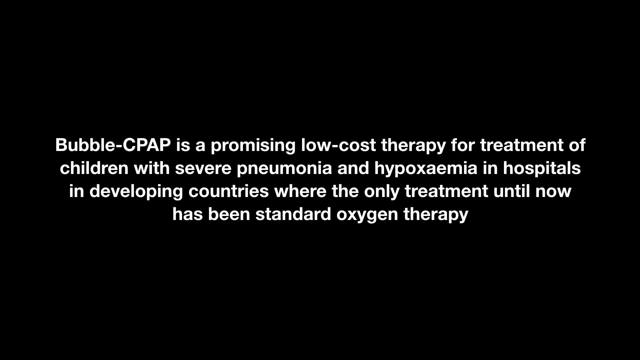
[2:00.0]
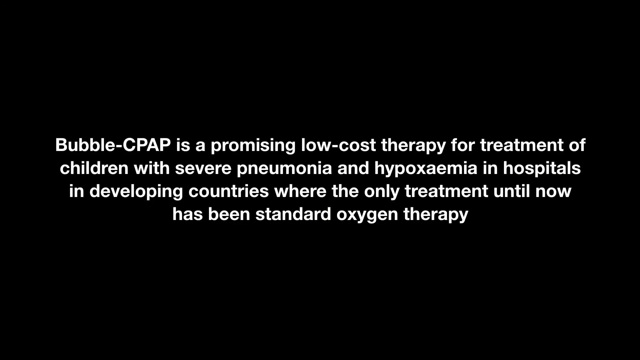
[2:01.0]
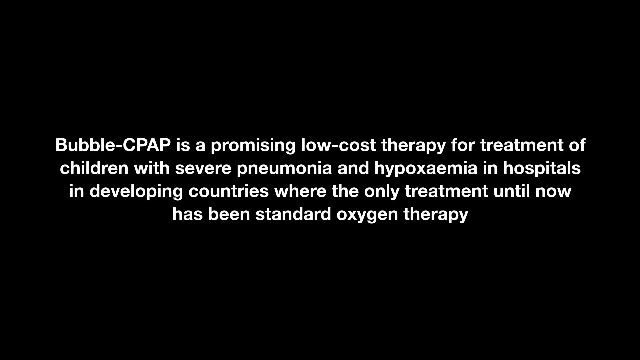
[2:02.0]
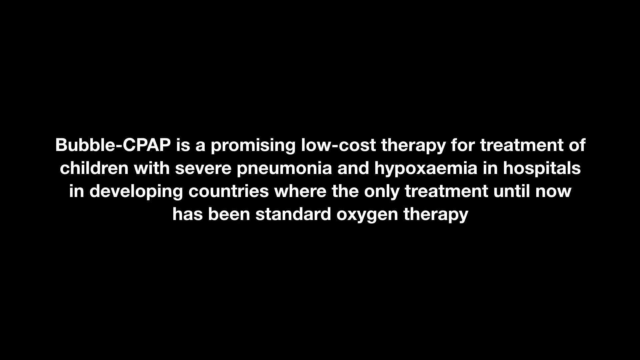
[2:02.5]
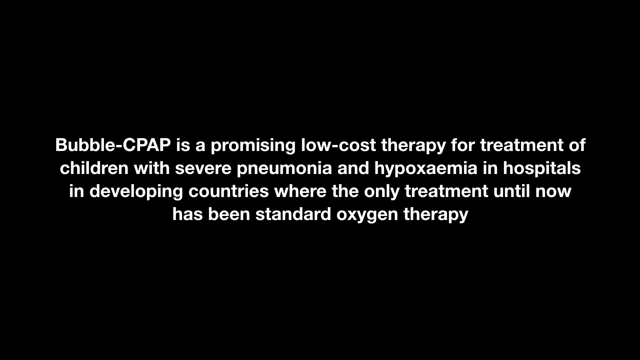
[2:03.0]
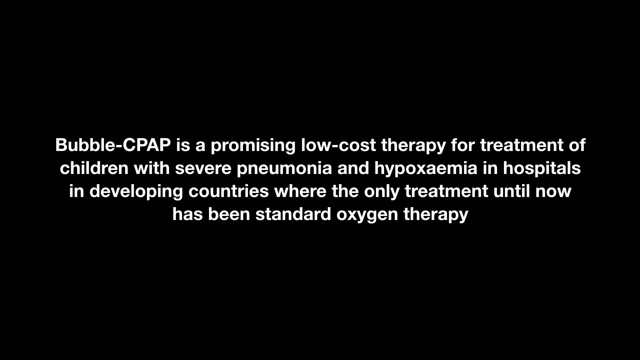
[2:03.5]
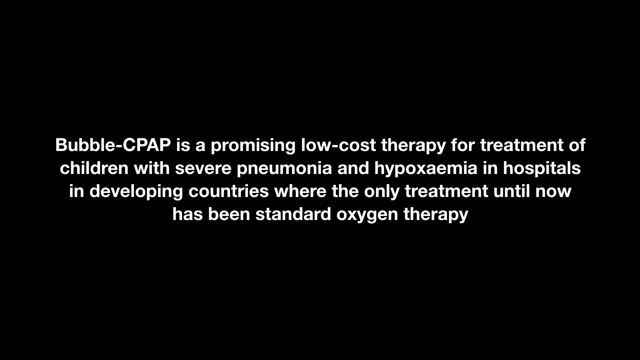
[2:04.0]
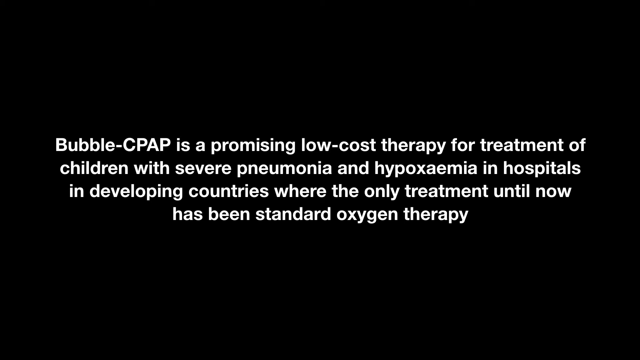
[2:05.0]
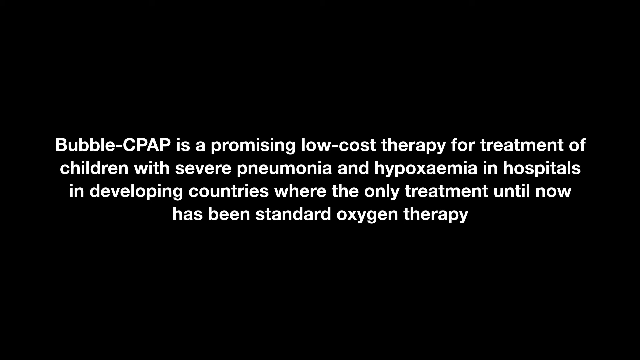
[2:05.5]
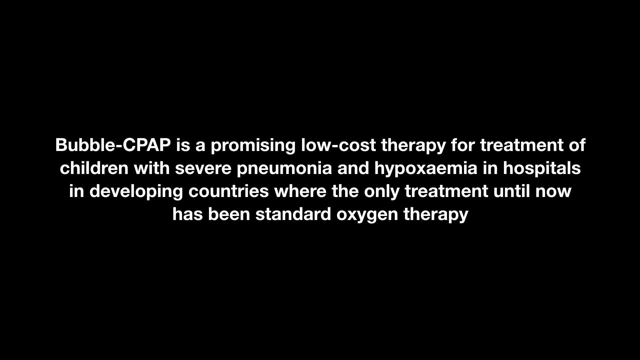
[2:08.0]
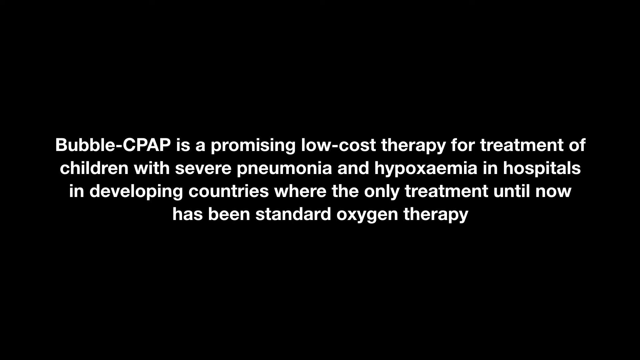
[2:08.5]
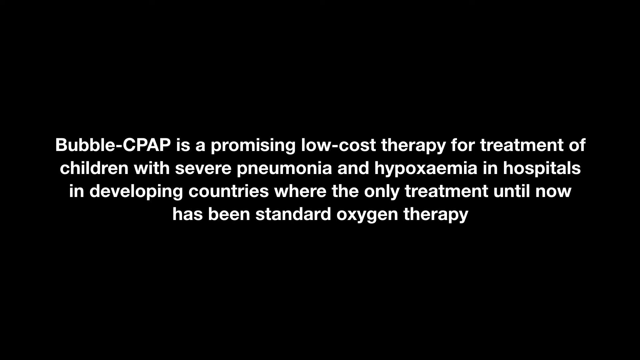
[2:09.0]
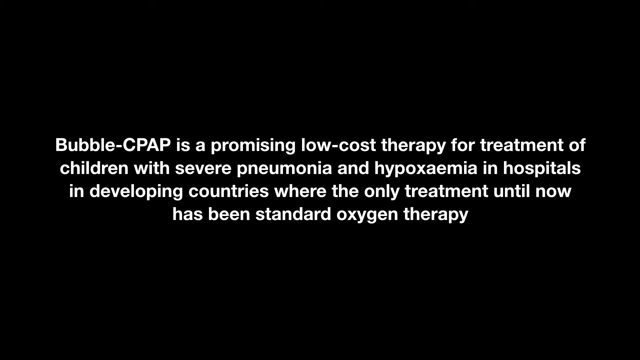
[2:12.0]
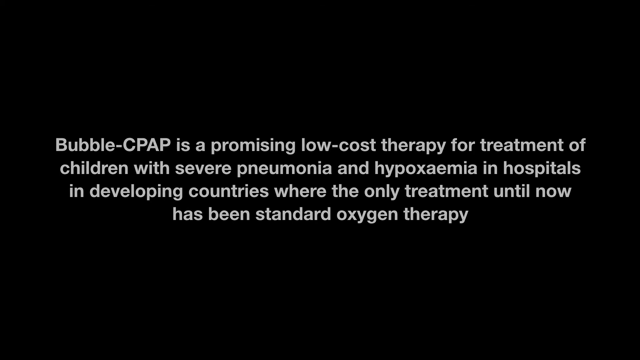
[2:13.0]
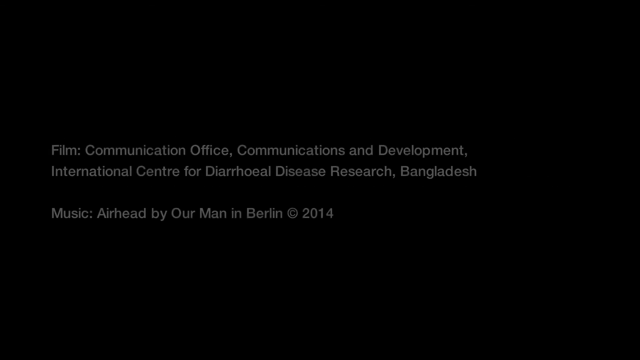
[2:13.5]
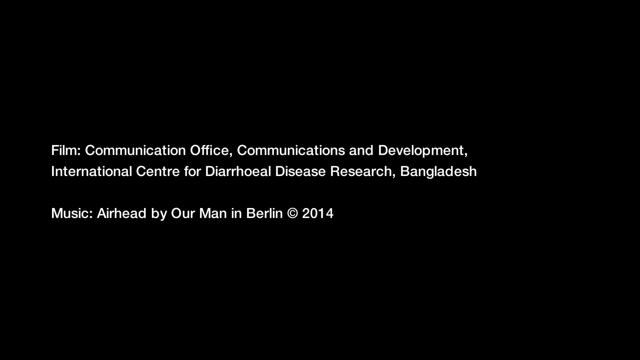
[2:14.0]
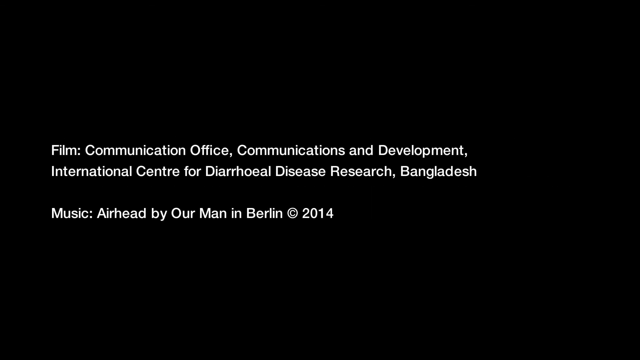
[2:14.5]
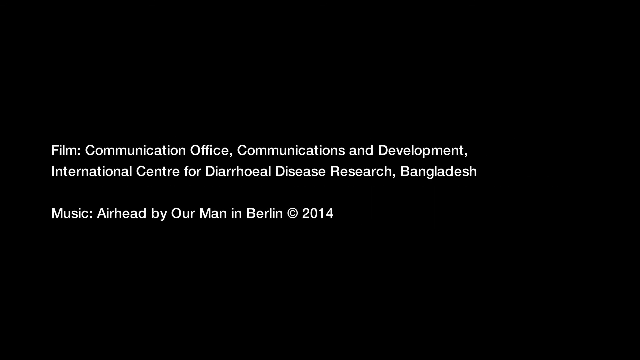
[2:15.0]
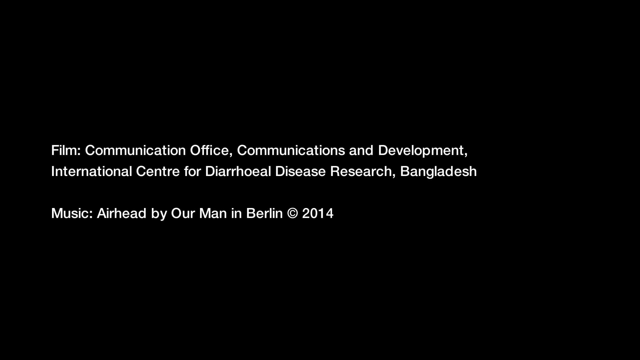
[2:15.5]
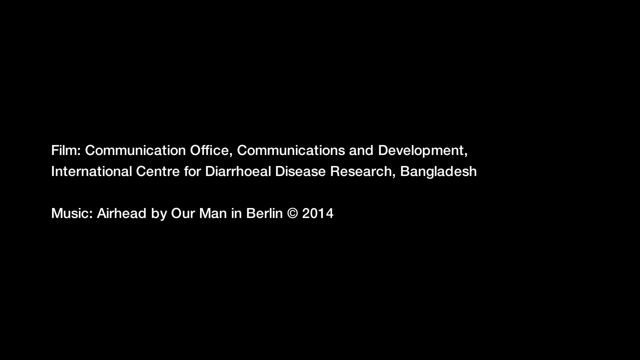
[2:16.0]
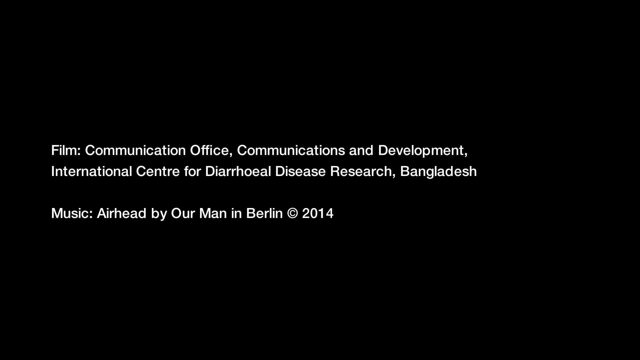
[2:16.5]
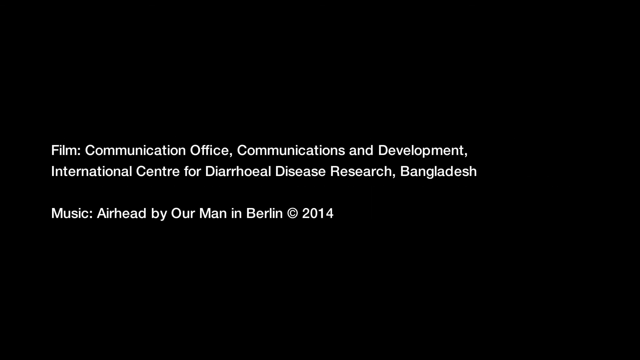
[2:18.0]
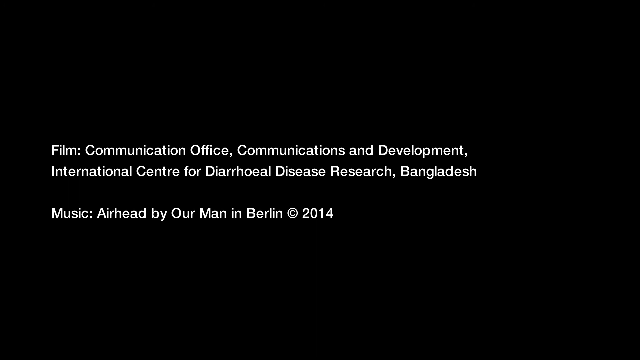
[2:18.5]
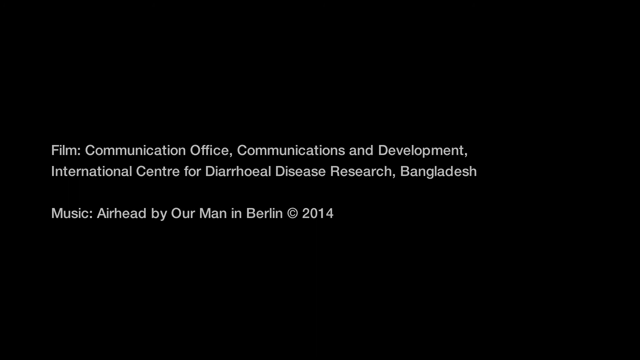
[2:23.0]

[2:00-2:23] A black screen shows white text beginning "bubble cpap is a promising low-cost therapy for treatment of children with severe pneumonia" and continuing "in hospitals in developing countries where the only treatment until now has been standard oxygen therapy". The video cuts to a new black screen with smaller white text reading "Film Communication Office, Communications and Development International Centre for Diarrhoeal Disease Research, Bangladesh" and "Music, Airhead by Our Man in Berlin", with a copyright logo and 2014 next to it. There is no other text or imagery on this outro screen, which eventually fades out to complete black.